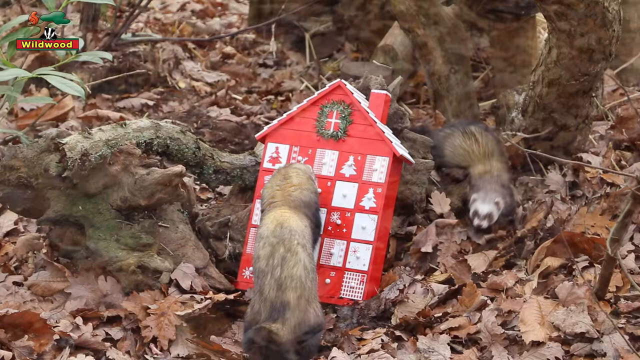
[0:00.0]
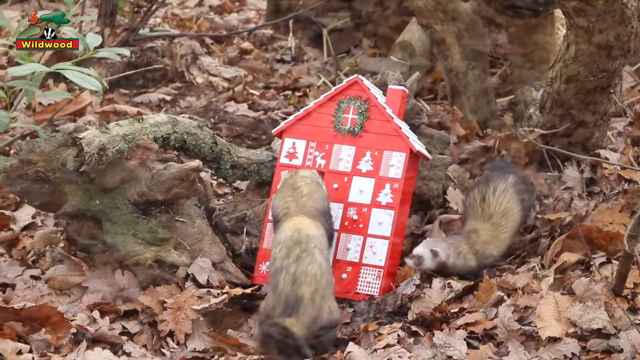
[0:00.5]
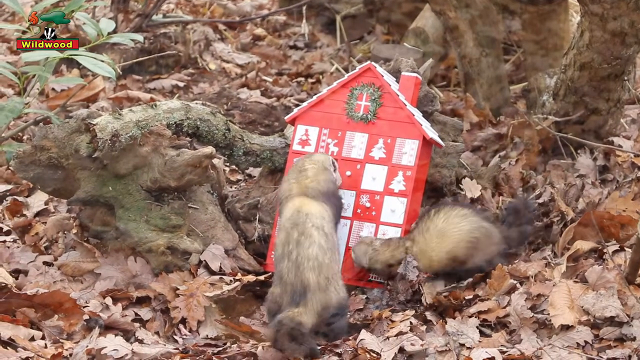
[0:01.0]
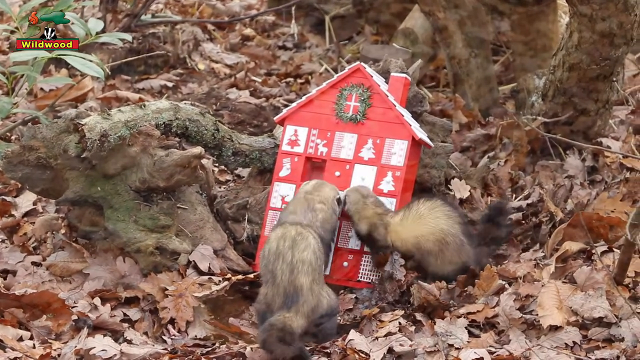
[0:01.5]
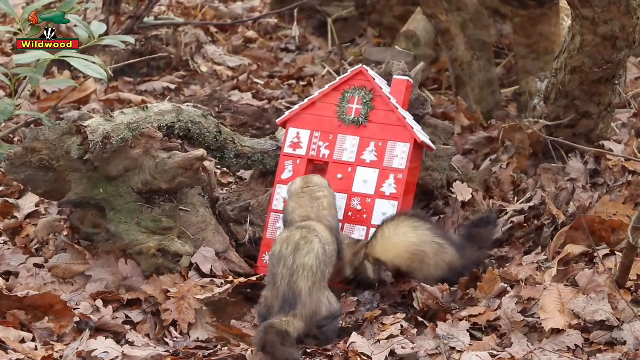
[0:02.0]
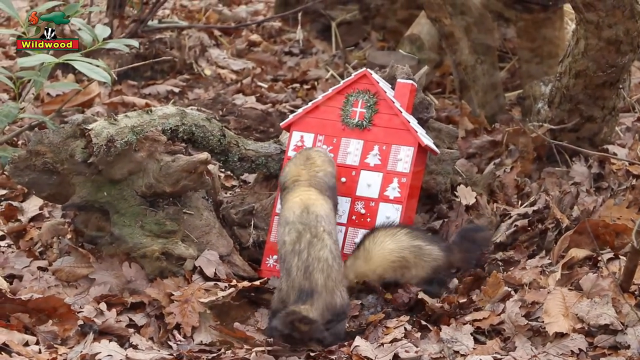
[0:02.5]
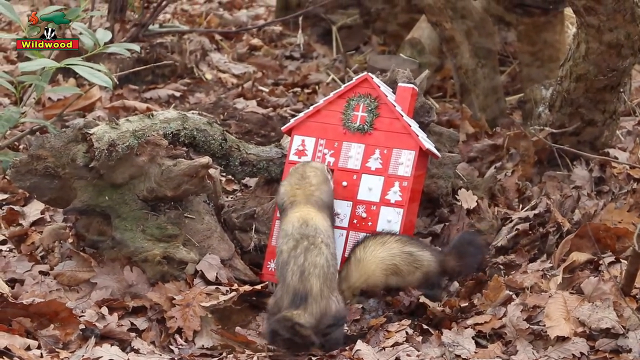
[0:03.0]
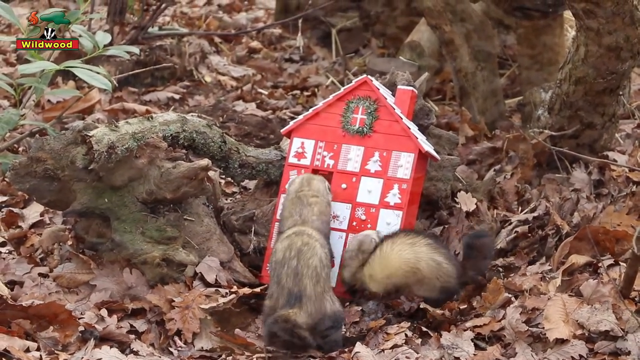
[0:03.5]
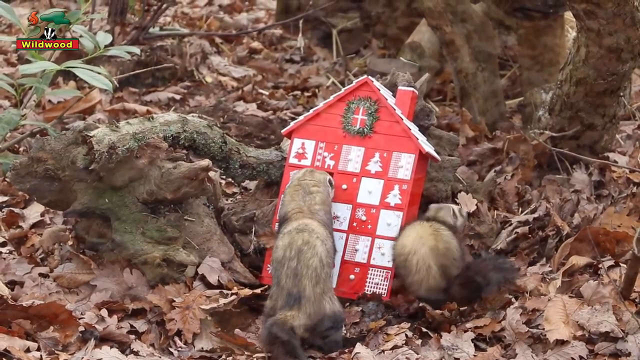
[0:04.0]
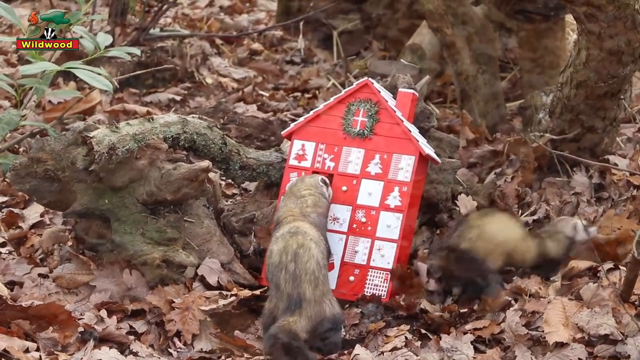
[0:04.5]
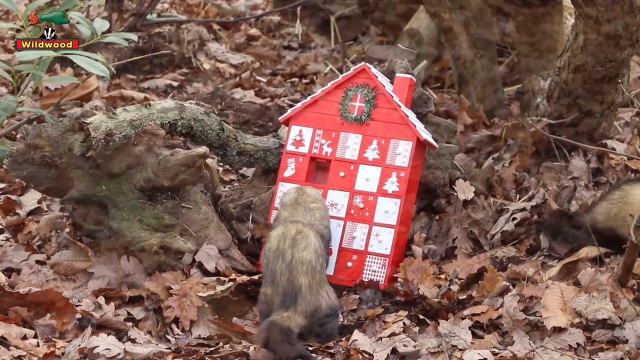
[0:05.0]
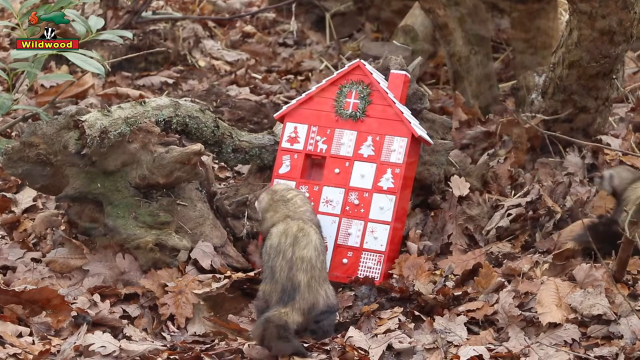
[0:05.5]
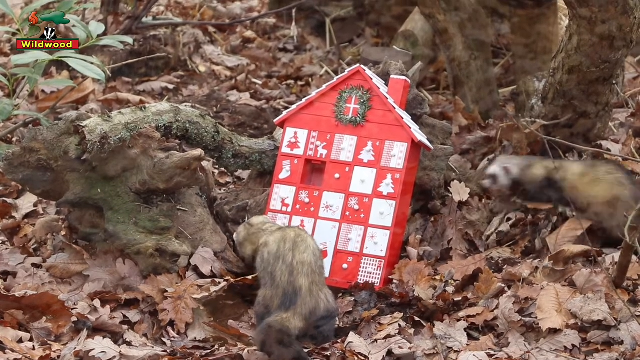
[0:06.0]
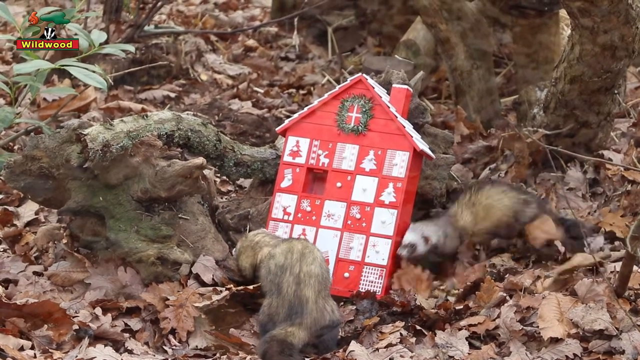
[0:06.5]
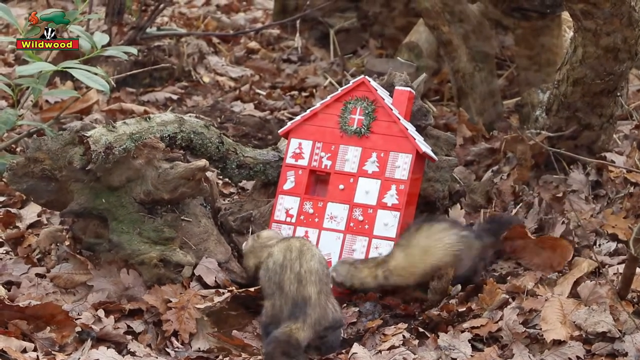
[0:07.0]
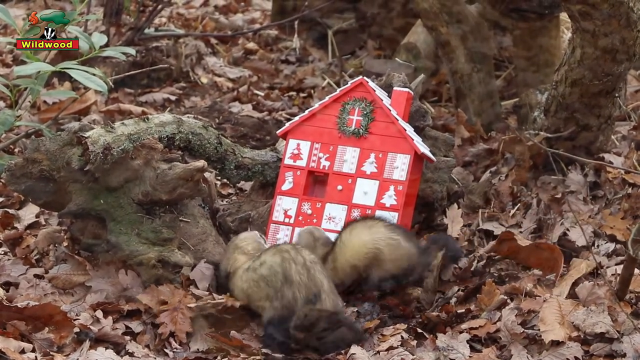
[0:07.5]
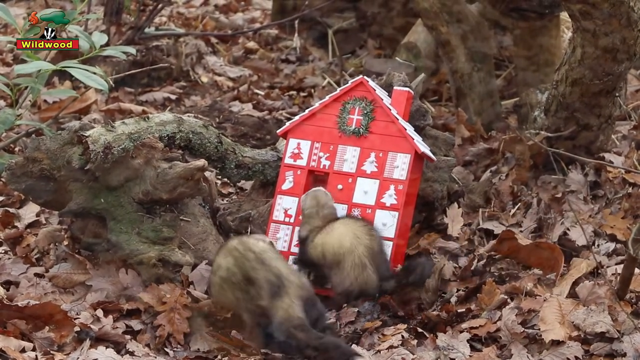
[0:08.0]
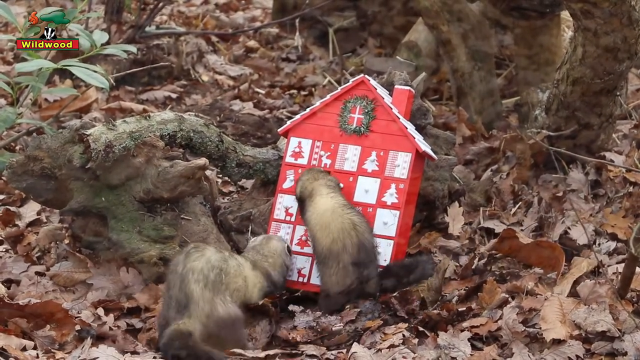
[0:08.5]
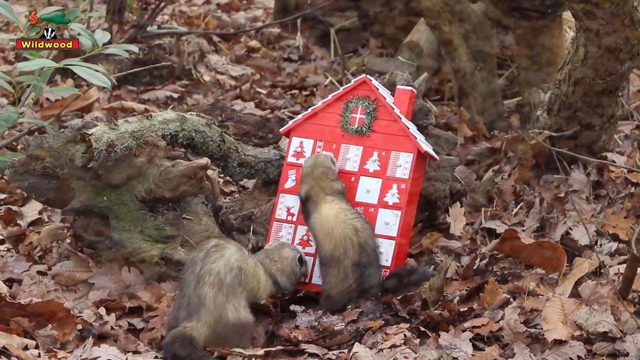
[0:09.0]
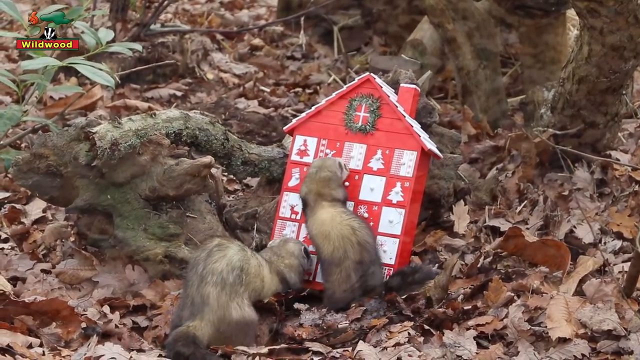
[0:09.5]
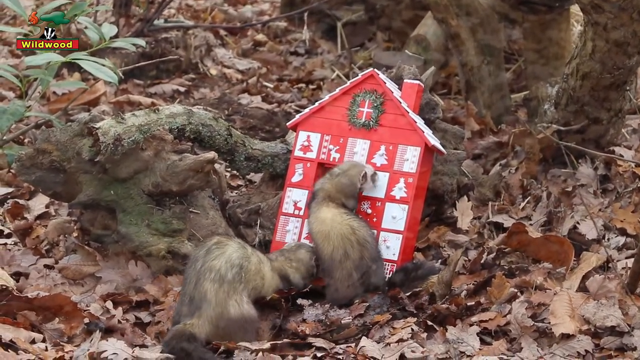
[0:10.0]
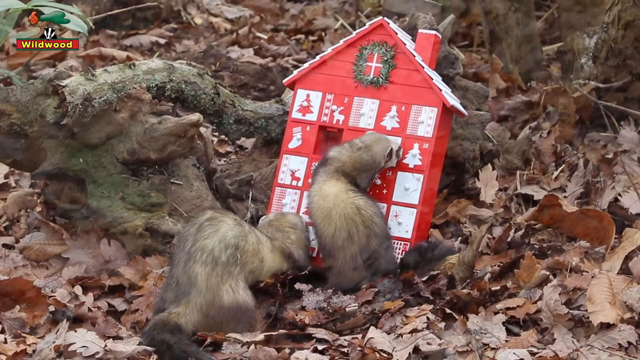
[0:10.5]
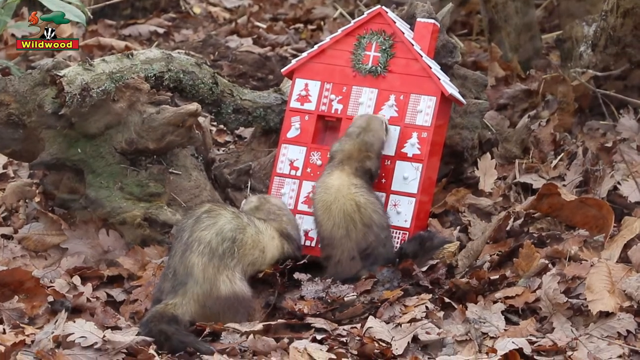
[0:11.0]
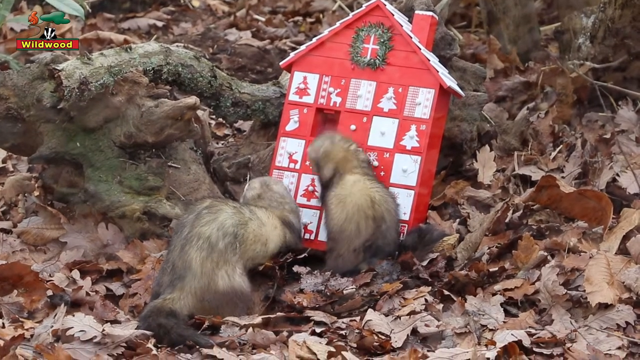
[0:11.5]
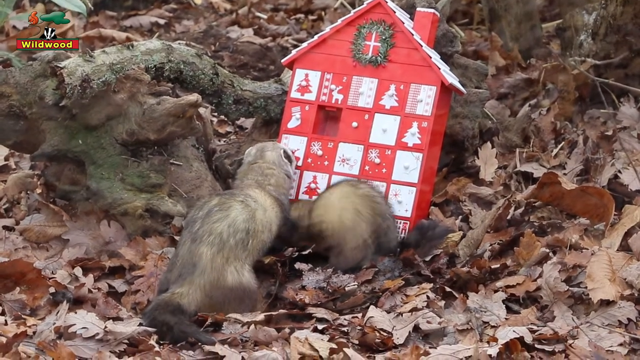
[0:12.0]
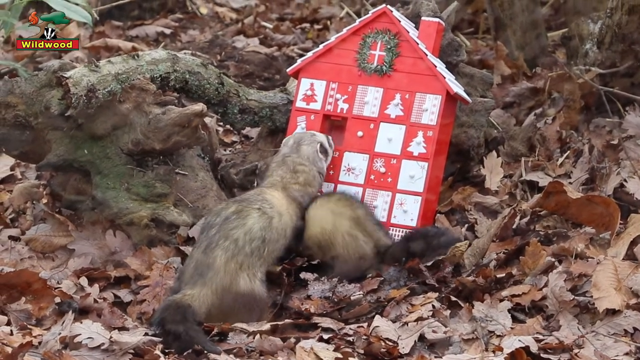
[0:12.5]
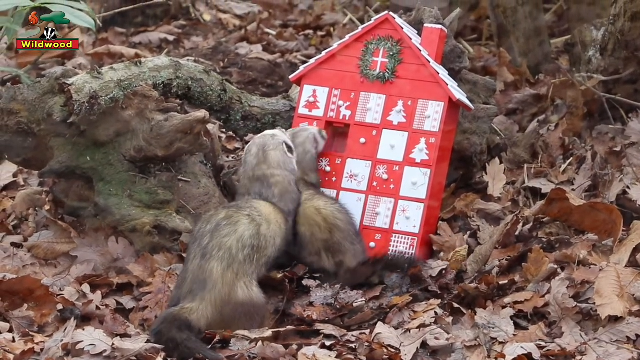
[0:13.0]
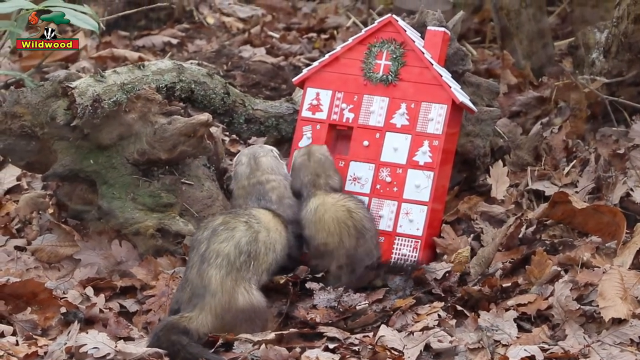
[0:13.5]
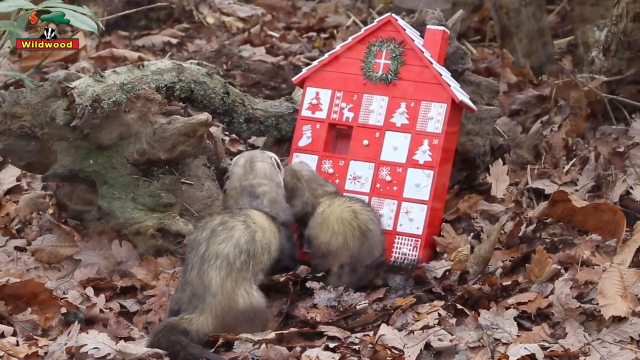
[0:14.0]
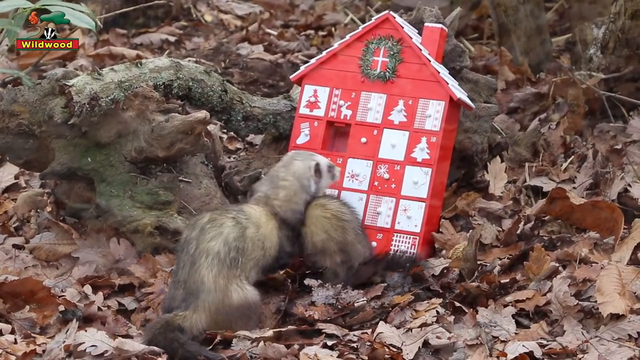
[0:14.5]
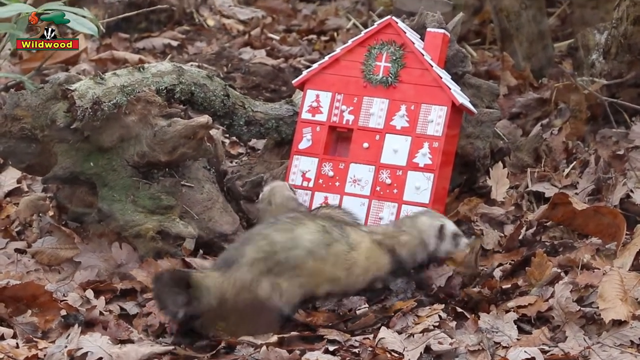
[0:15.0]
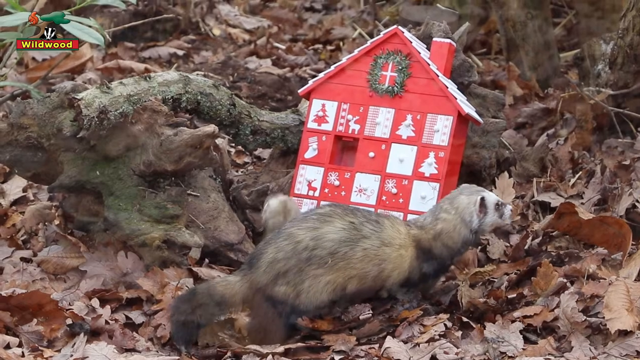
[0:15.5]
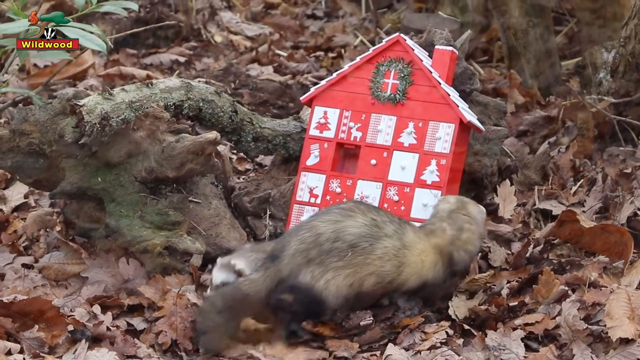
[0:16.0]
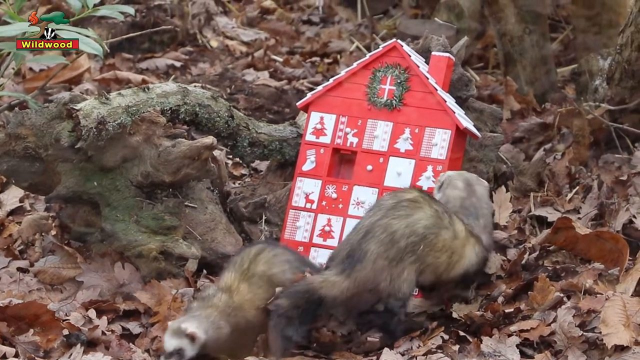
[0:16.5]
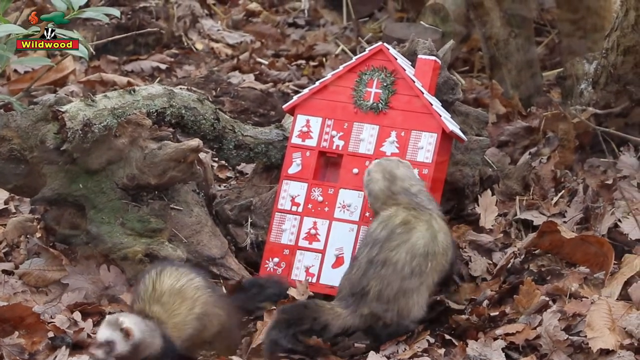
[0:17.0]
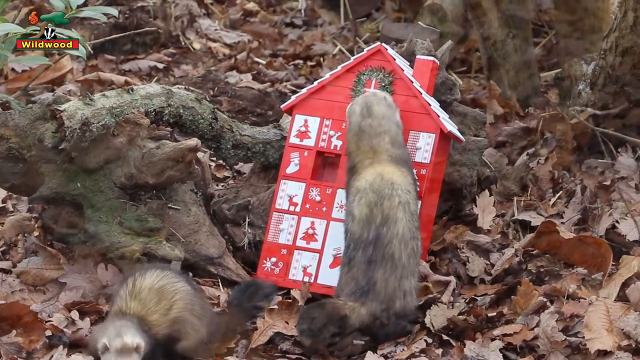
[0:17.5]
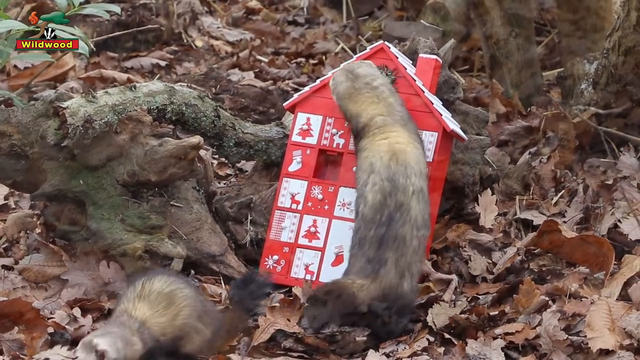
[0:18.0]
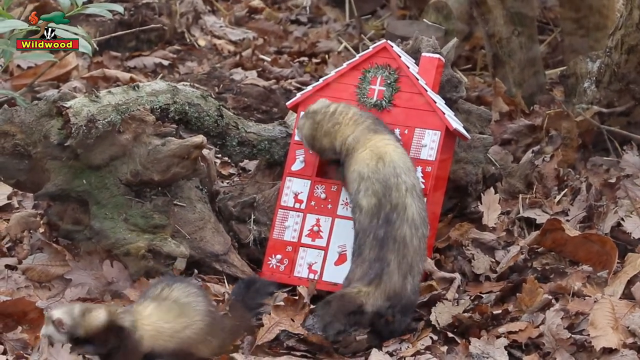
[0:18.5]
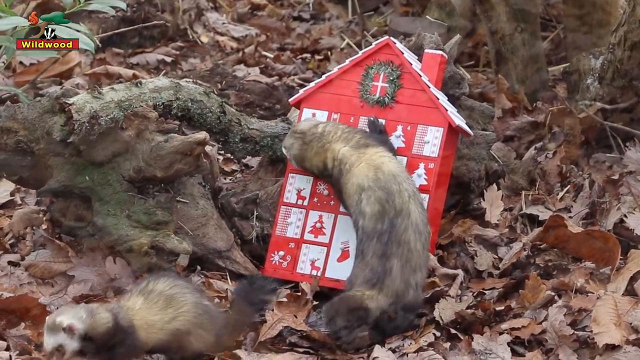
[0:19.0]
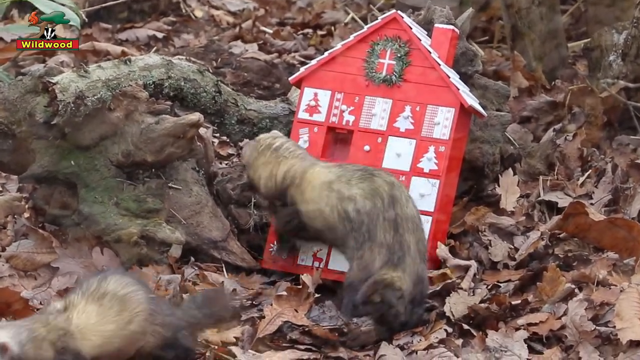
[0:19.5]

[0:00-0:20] Two ferrets play with a red plastic house, almost like a red plastic Swiss chalet and perhaps somewhat akin to an advent calendar. It has several rows of windows with decorations of Christmas trees and reindeer, a little plastic chimney at the top, and a decorative green object representing a wreath of leaves with a cross in the middle. One ferret, in the middle, paws at the house and has managed to open one of the windows, revealing a compartment underneath. The other ferret comes up, and the two play together, sniffing at the plastic house; perhaps there was some food behind the windows. The background is a woodland floor with brown dead leaves and a lichen-coloured dead log on which the red plastic house is supported.